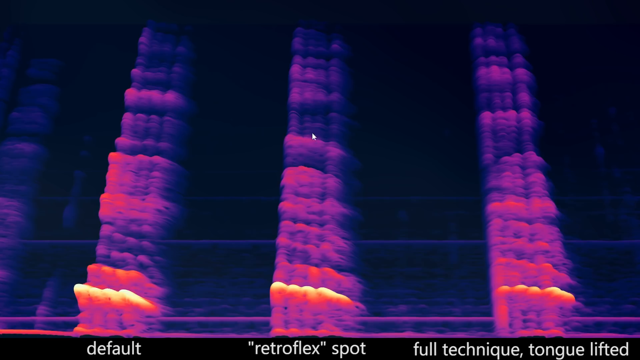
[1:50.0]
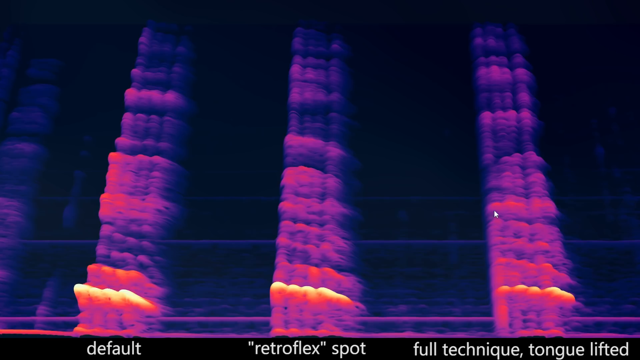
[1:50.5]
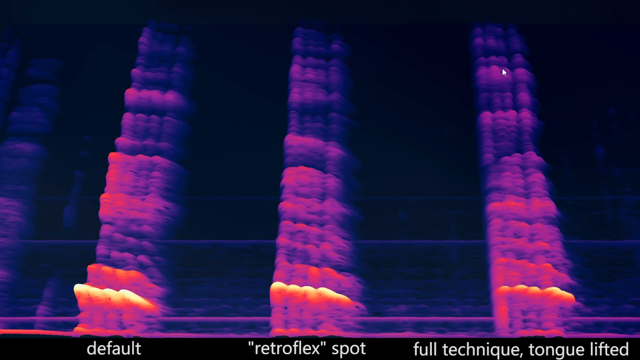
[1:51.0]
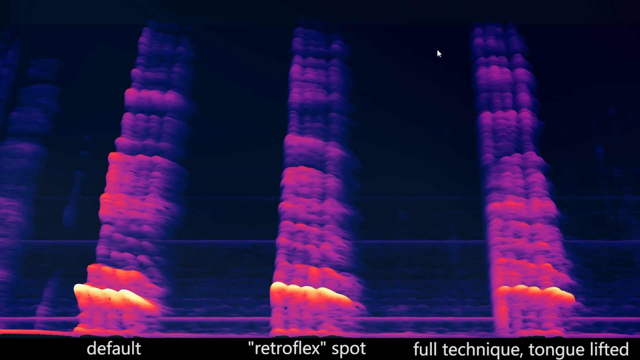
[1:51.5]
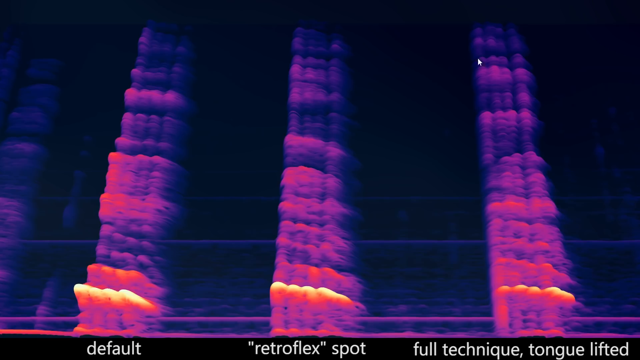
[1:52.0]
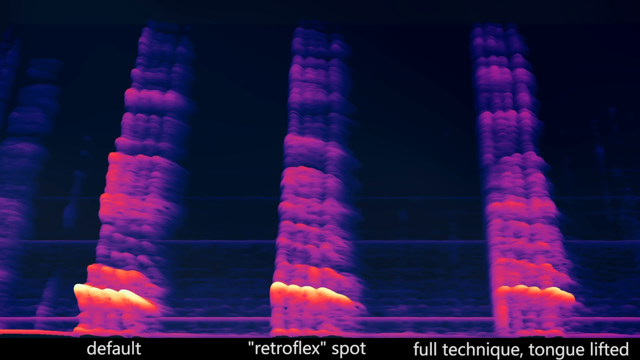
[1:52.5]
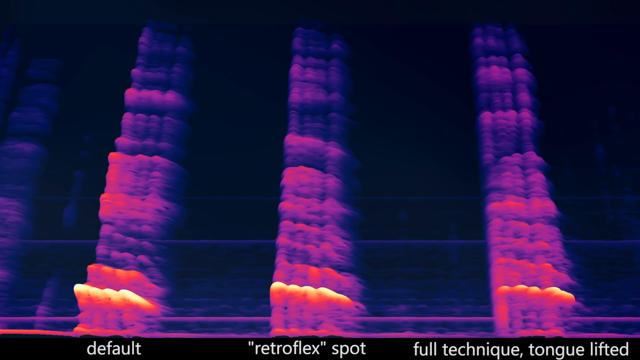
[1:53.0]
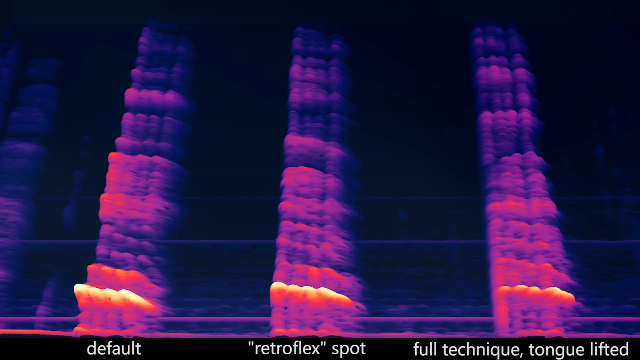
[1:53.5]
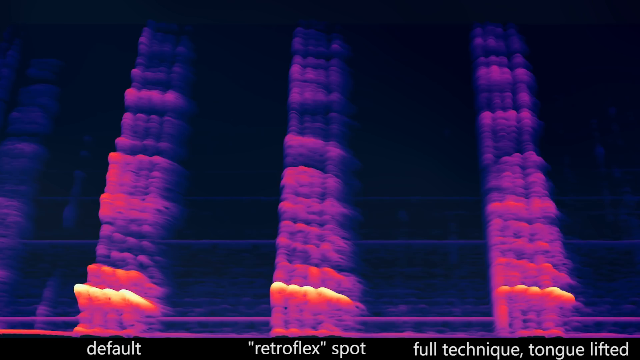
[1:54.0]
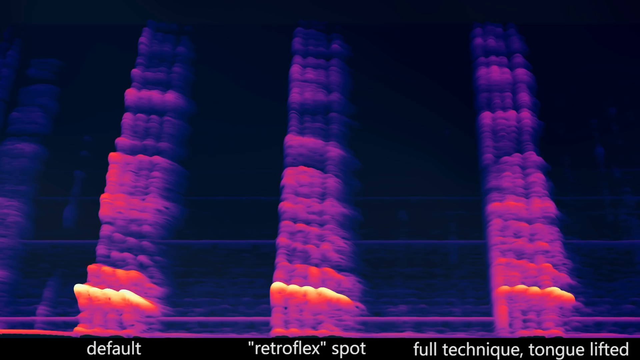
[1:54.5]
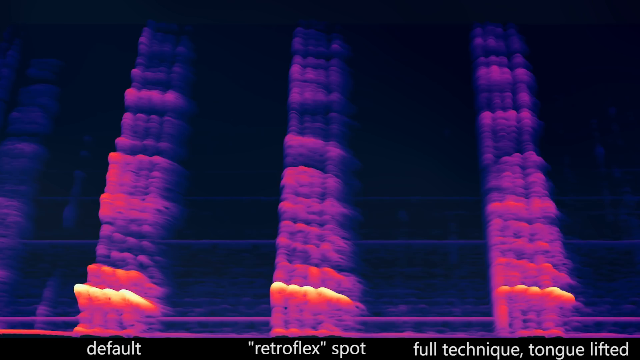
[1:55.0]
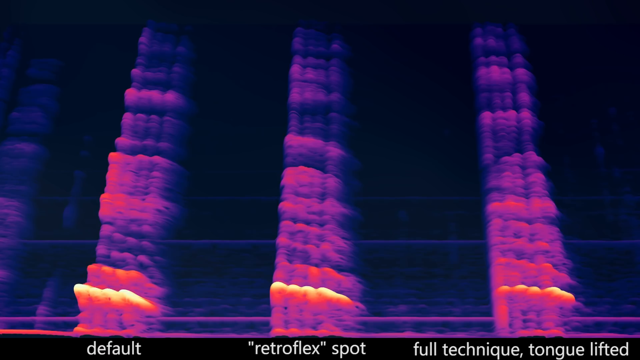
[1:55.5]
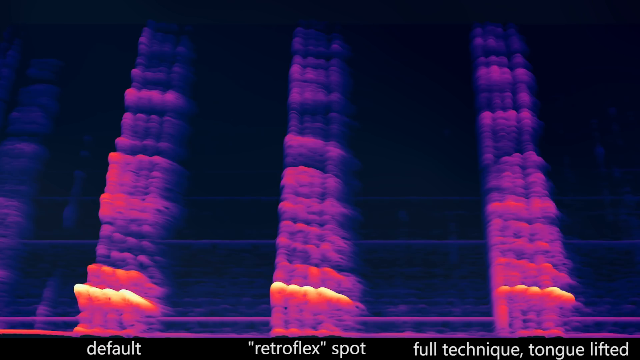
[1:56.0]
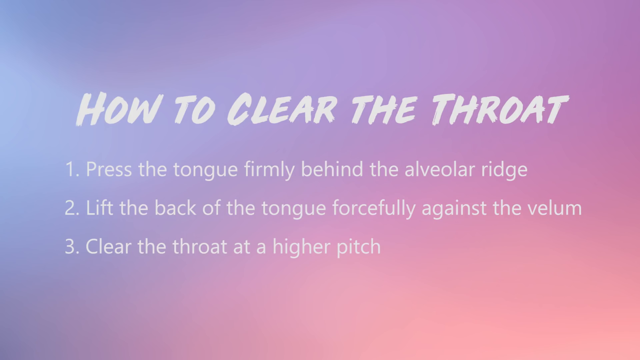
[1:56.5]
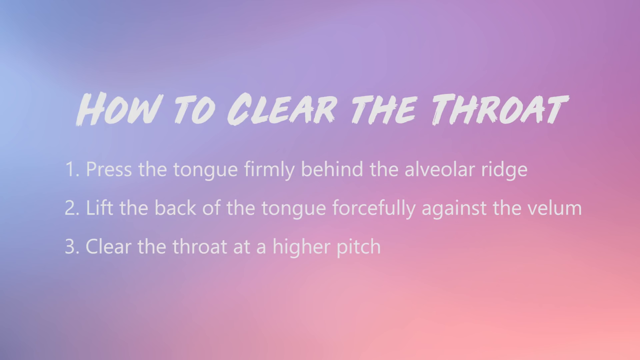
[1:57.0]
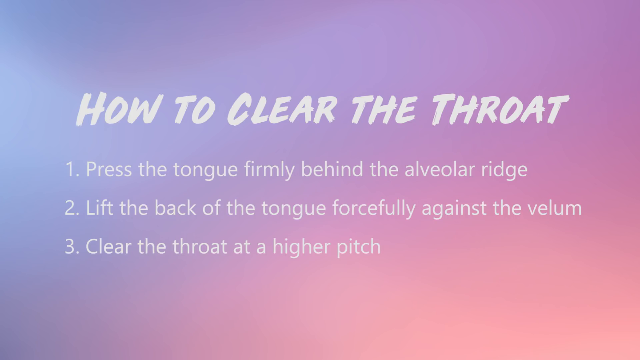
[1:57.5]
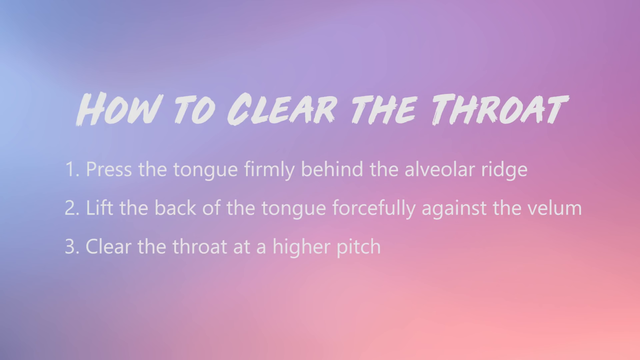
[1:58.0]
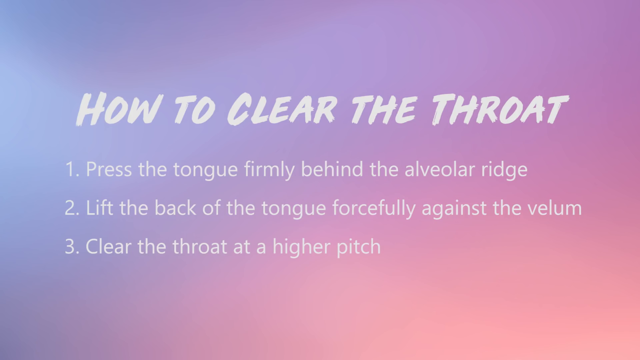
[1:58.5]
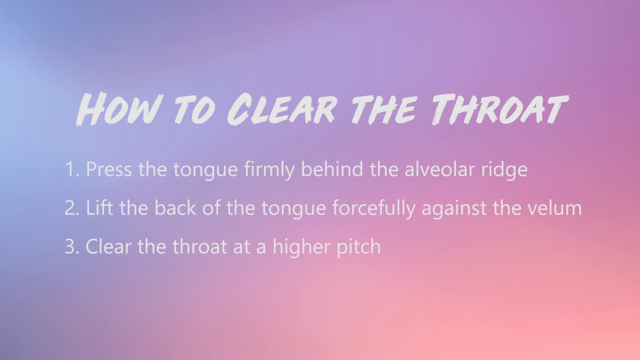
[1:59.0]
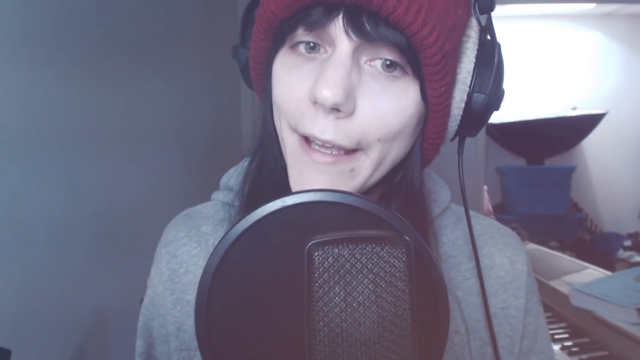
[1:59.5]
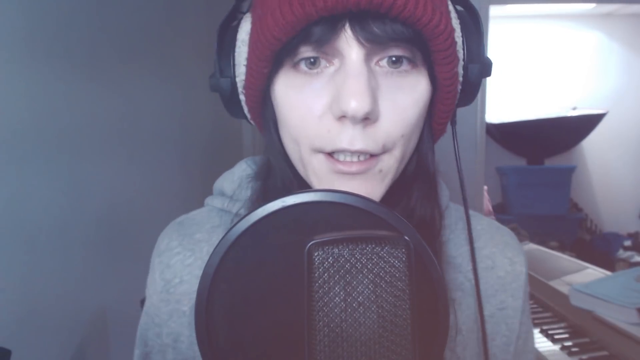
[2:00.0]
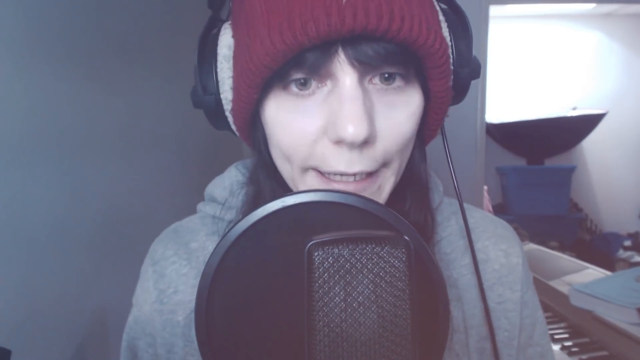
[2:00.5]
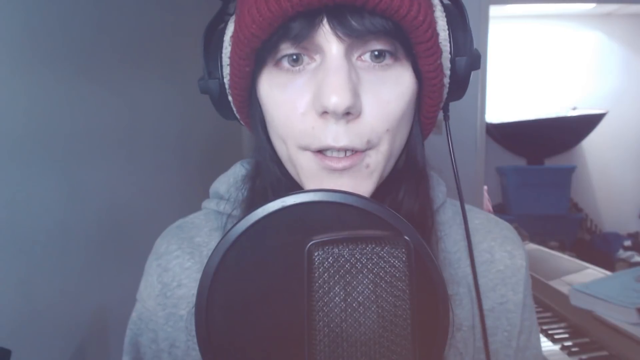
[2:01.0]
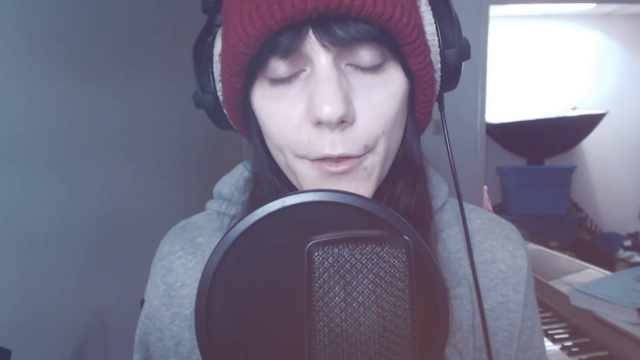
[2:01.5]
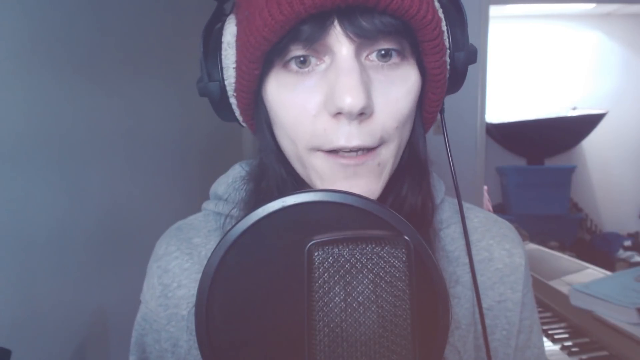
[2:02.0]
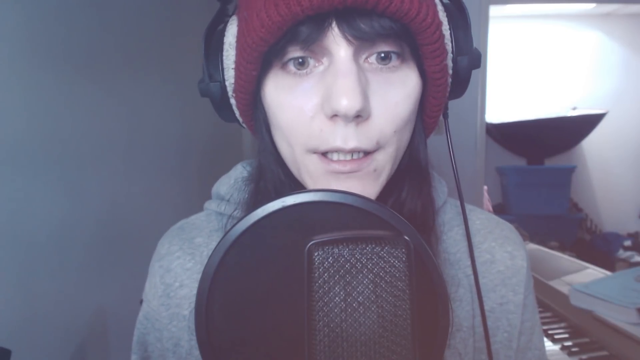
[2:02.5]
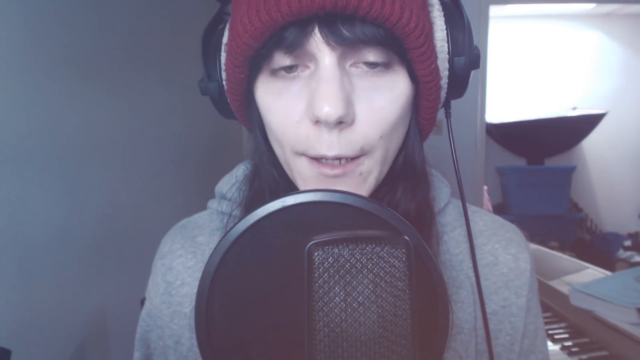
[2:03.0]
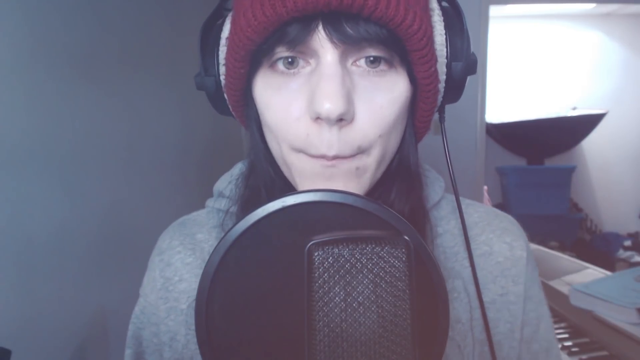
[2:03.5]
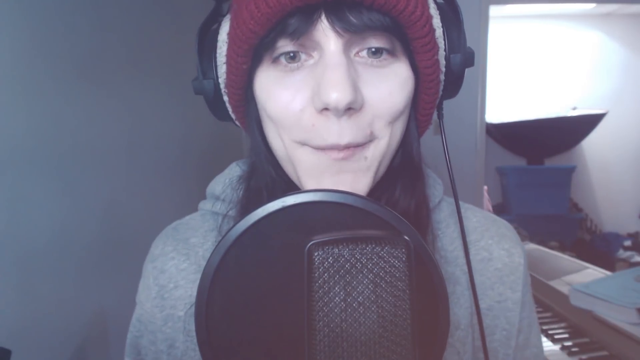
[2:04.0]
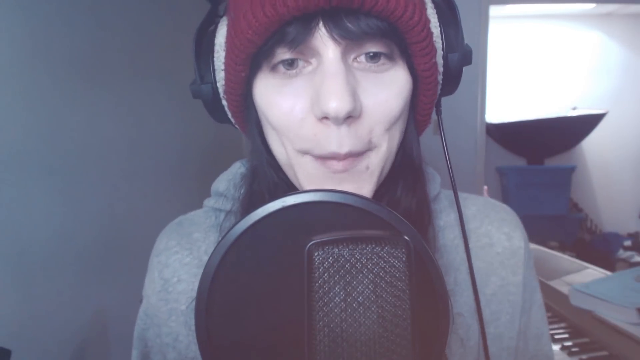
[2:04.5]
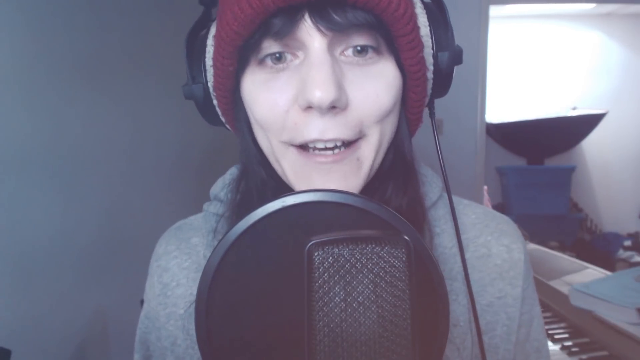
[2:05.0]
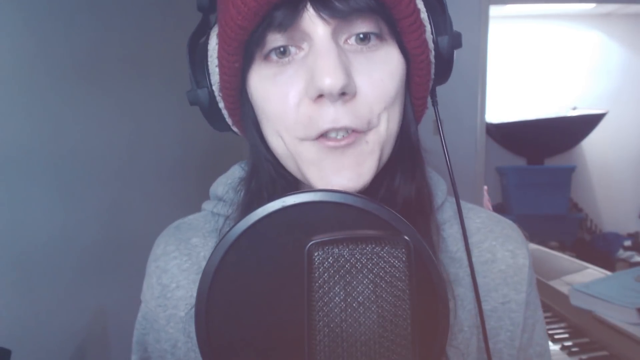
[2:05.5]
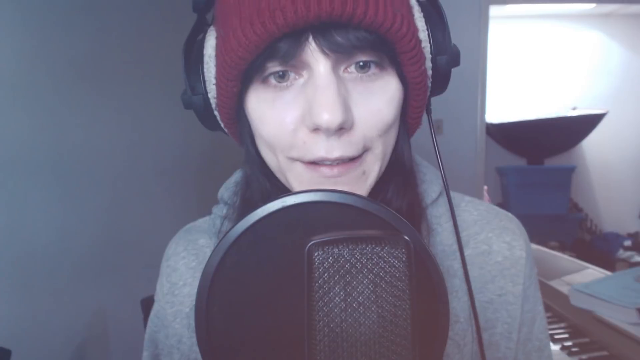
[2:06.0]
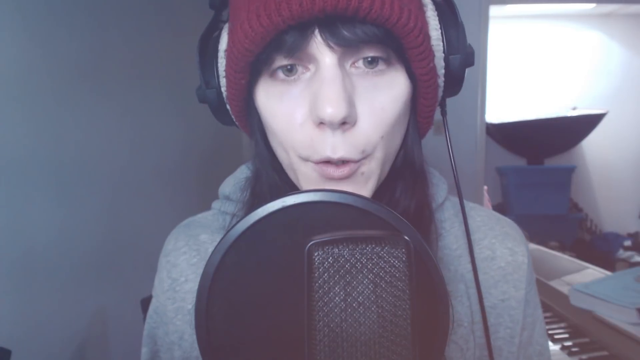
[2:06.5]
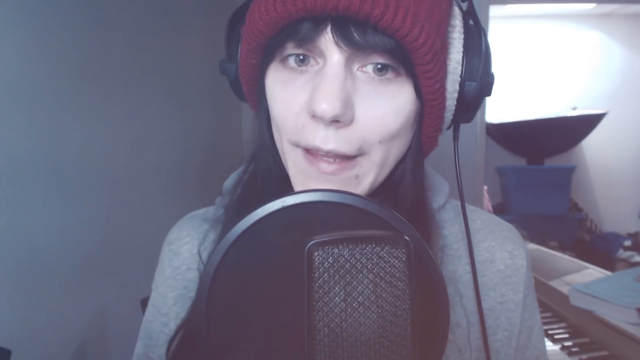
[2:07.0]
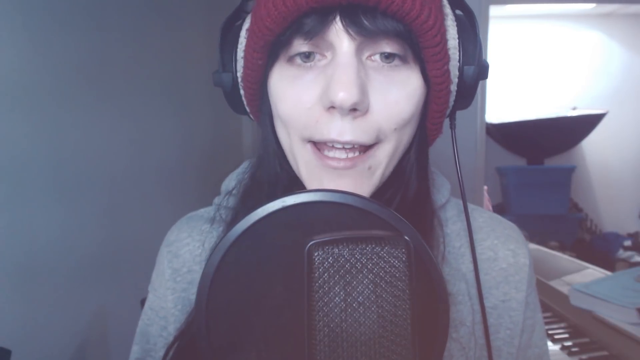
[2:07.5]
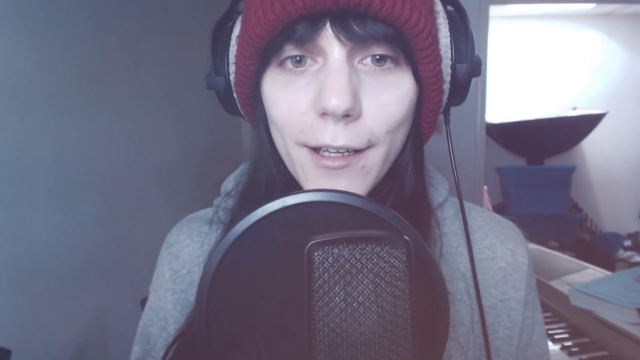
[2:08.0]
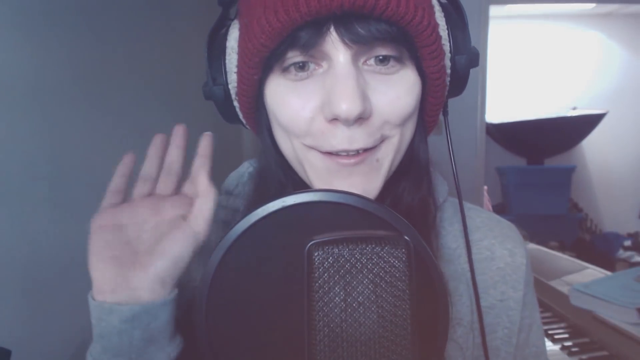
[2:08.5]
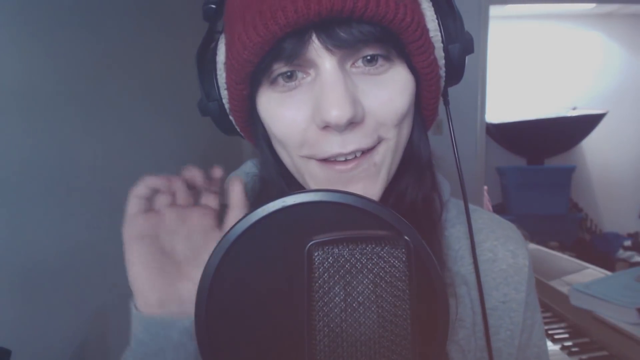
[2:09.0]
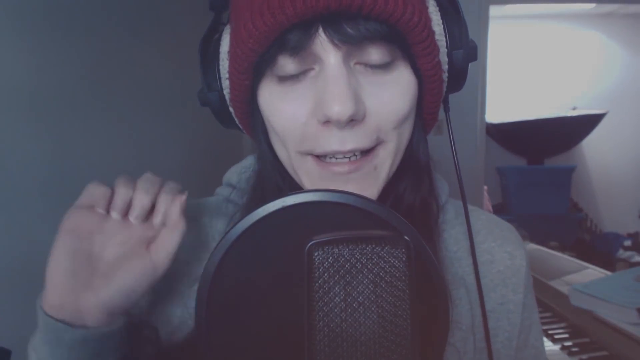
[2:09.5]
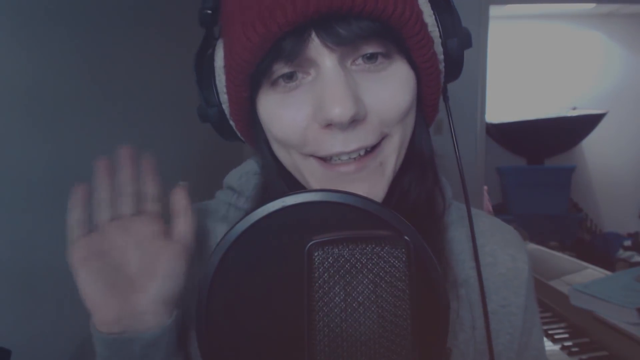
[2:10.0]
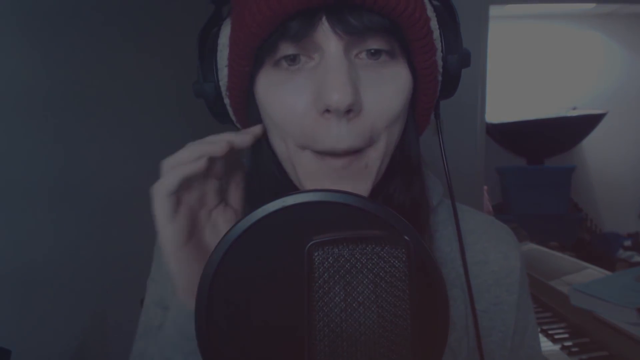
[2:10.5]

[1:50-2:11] Large streaks of a purple, bumpy line appear somewhat split, with additional similar lines, orange glowing bumps, and a slightly blurry, smudged effect on some of the round bumps. Text at the bottom of the screen reads "default retroflex spot and full technique tongue lifted," and the mouse moves around. A purple and pink screen follows with bold white text reading "how to clear the throat. One, press the tongue firmly behind the alveolar ridge. Two, lift the back of the tongue forcefully against the velum. Three, clear the throat at a higher pitch." Then a person, a man or a woman, appears wearing a red beanie, black headphones and a gray sweatshirt, with a microphone in front of them and a light and other miscellaneous objects in the background. They talk into the microphone, then smile and wave goodbye as the video slowly fades out.